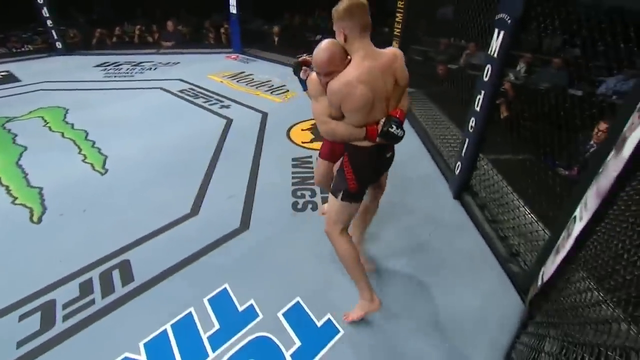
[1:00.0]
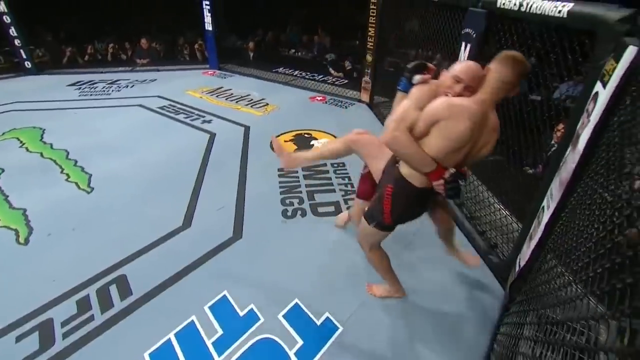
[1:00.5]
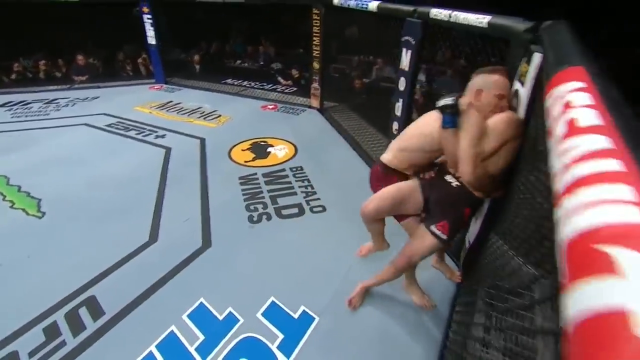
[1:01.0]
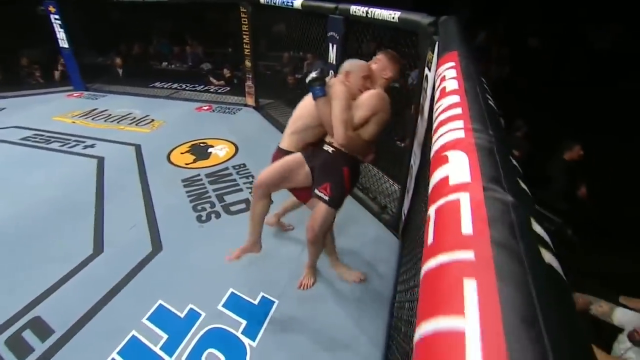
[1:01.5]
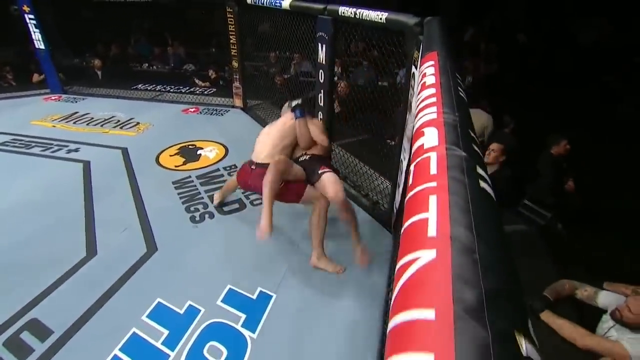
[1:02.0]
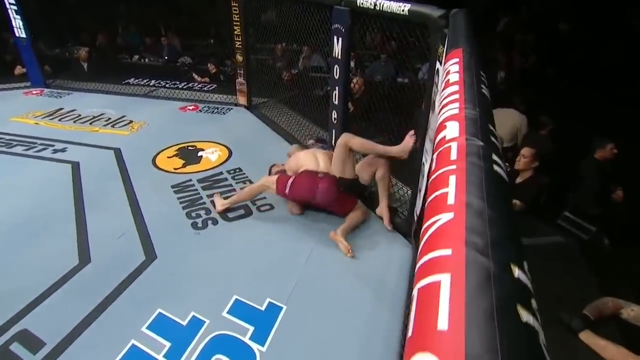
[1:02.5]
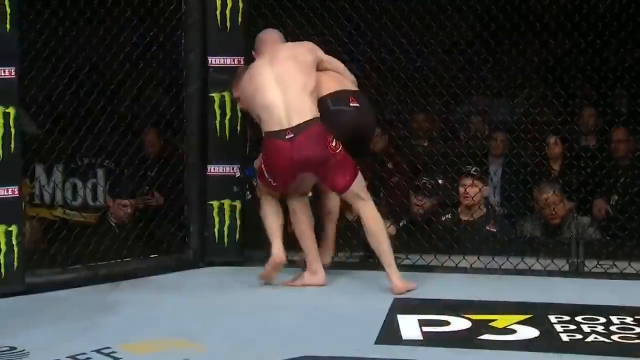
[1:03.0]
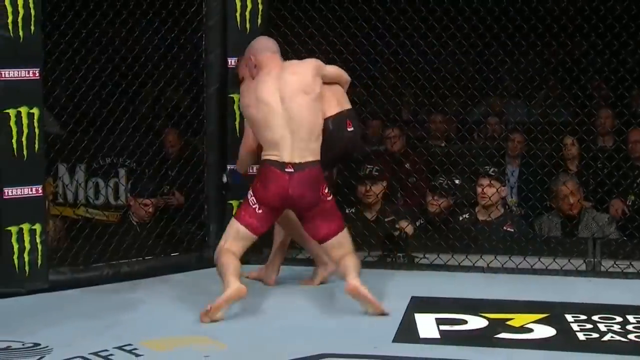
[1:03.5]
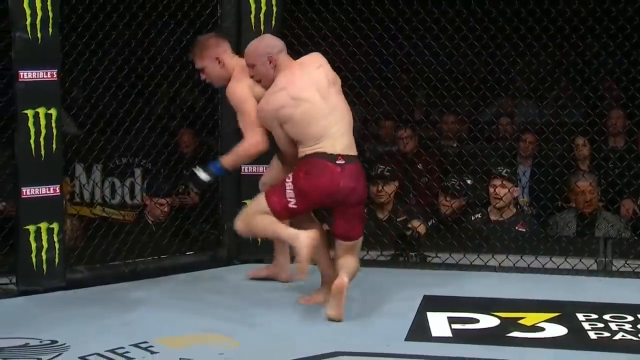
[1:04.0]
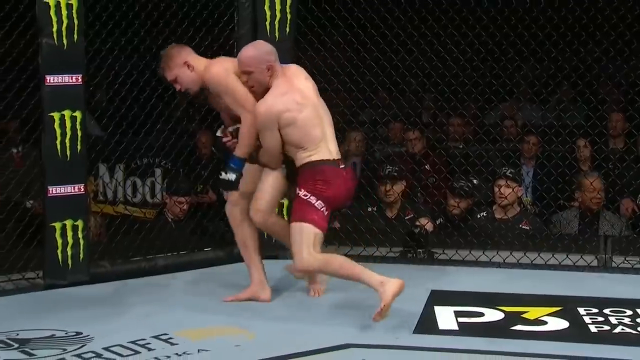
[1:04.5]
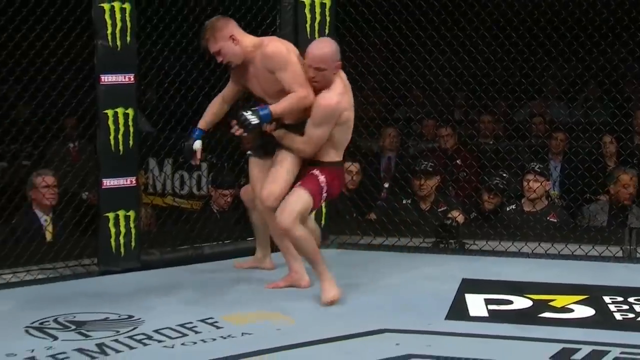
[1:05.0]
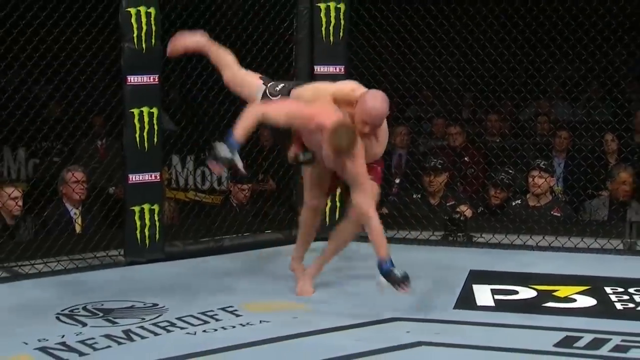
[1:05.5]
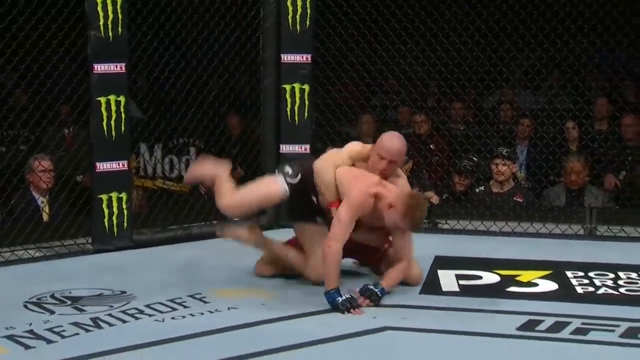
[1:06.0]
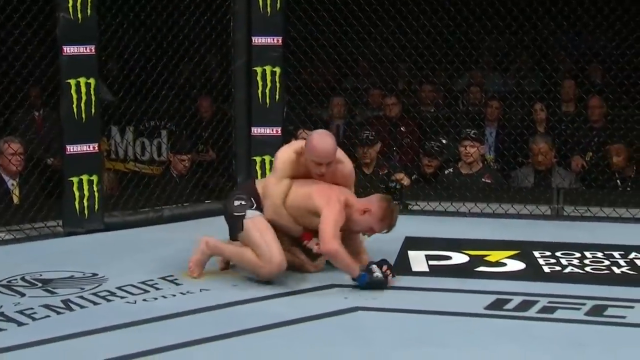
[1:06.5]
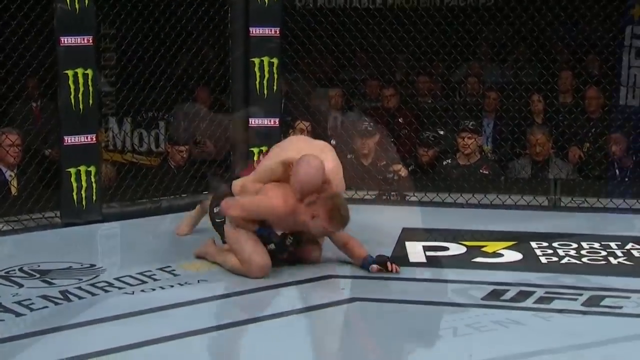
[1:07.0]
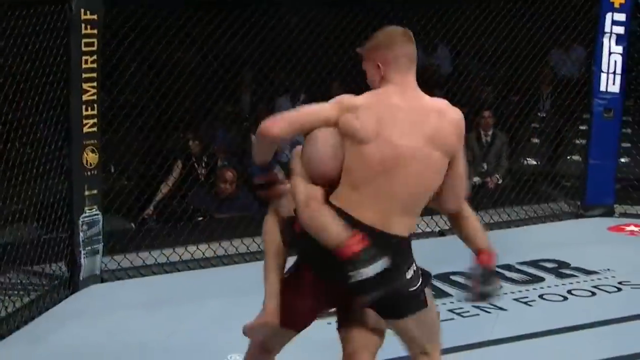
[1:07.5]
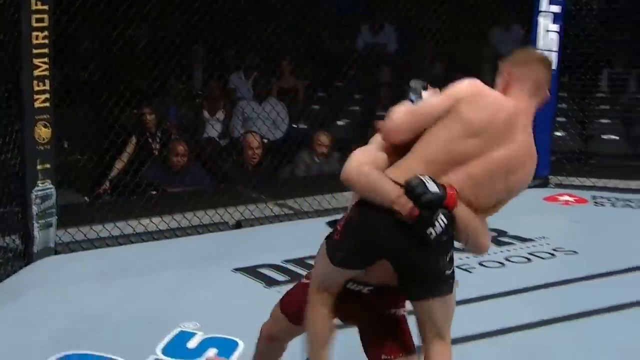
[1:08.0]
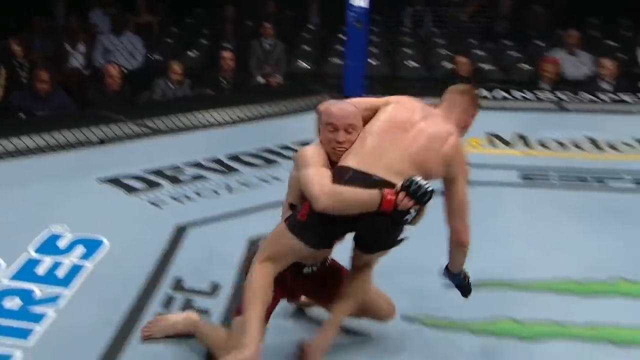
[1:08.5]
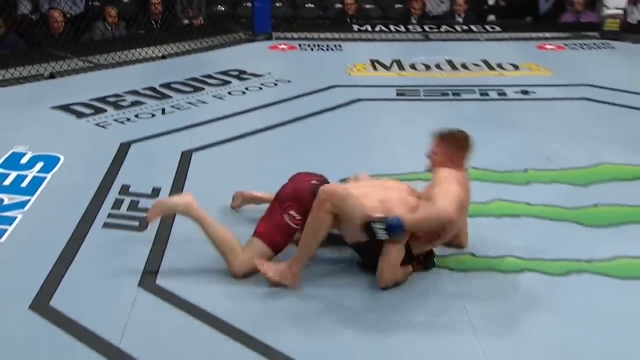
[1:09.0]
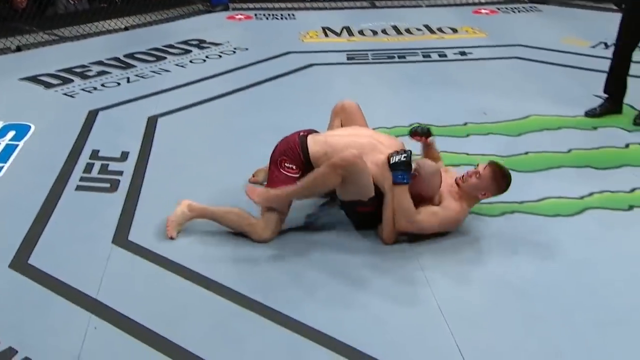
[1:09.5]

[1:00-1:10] A highlight montage shows Madsen throwing the other fighter around: he gets him by the hips and throws him down, knees him a couple of times, and throws him against the cage. Madsen wears maroon trunks and the other fighter wears black. Both are shirtless in trunks, barefoot, and wearing black UFC gloves. Nearly every highlight shows Madsen taking control. At one point he bounces the other fighter off the cage; he gets him from behind in a hip lock and throws him down, and bear-hug tackles him to the ground. In one highlight the other fighter lands a knee to Madsen's midsection. The montage ends with Madsen dominating the other fighter, and the UFC watermark logo stays in the bottom right corner.